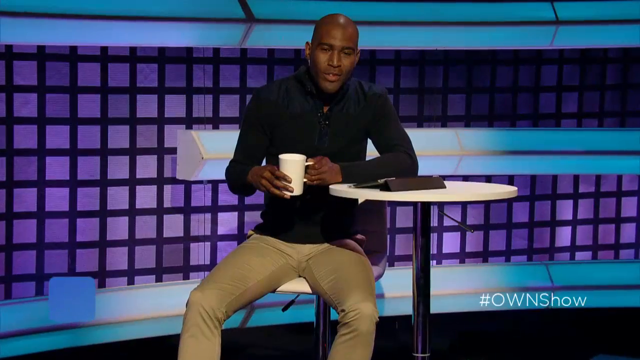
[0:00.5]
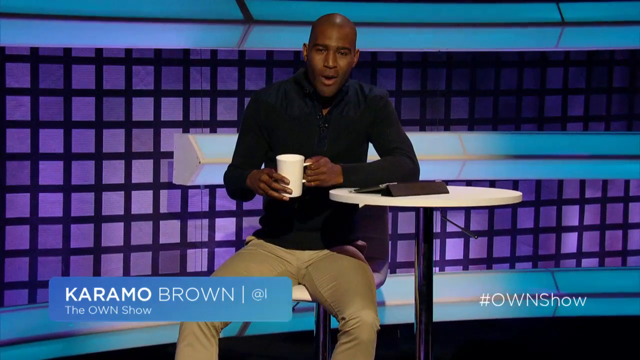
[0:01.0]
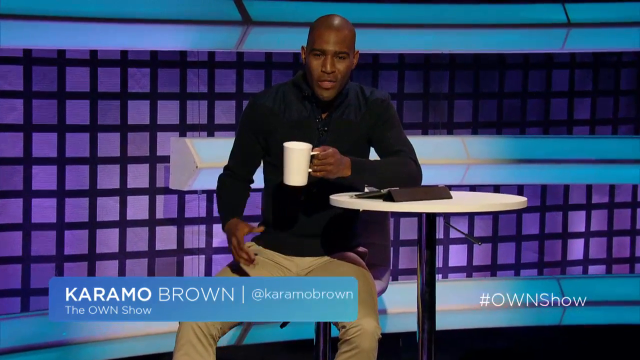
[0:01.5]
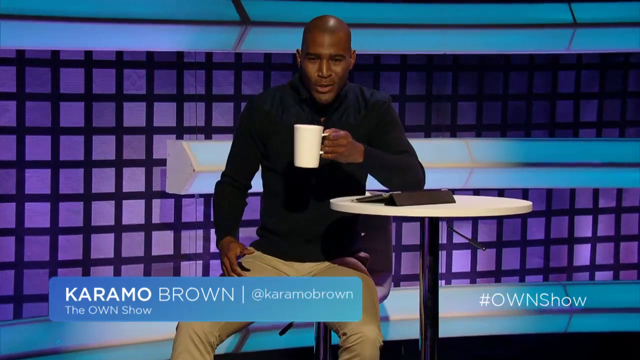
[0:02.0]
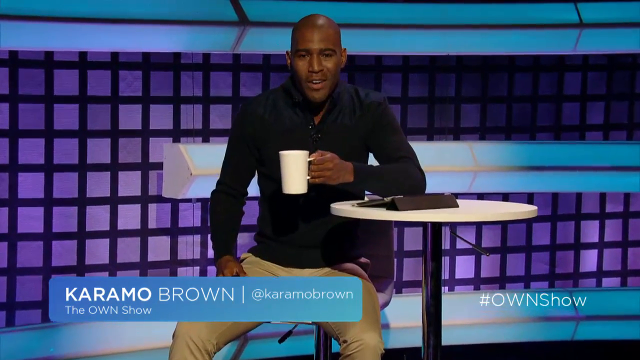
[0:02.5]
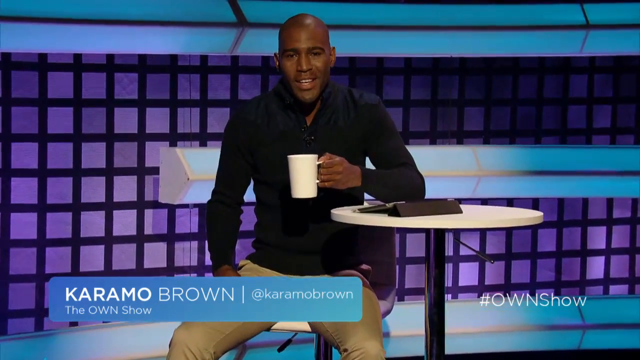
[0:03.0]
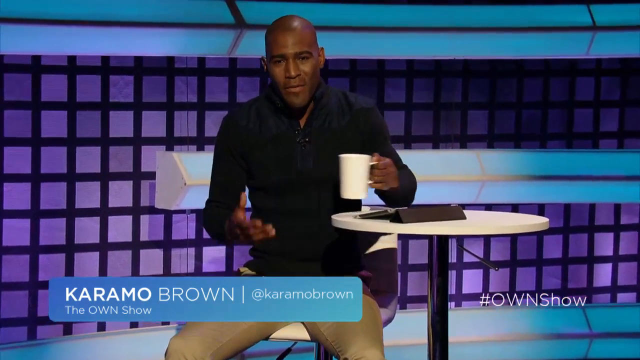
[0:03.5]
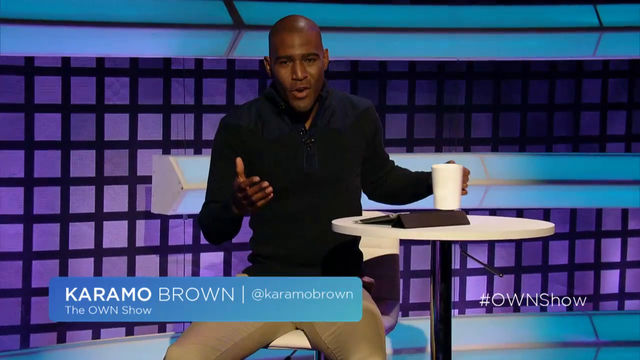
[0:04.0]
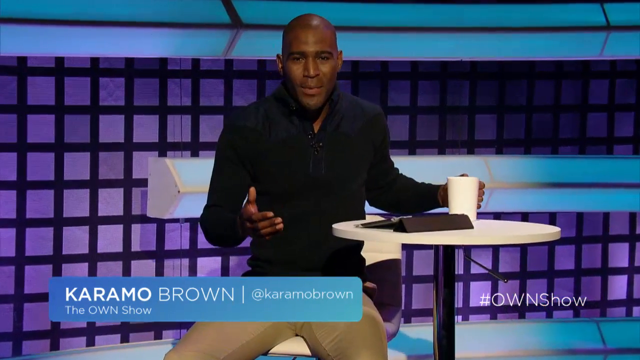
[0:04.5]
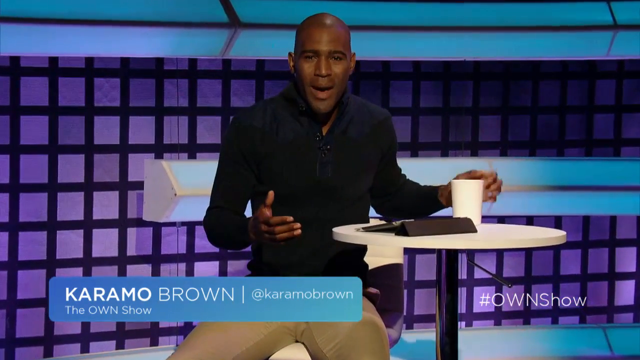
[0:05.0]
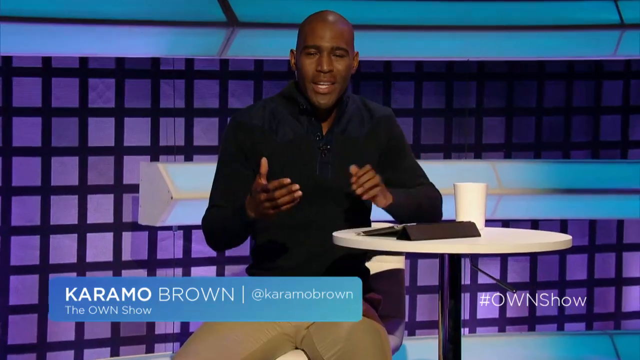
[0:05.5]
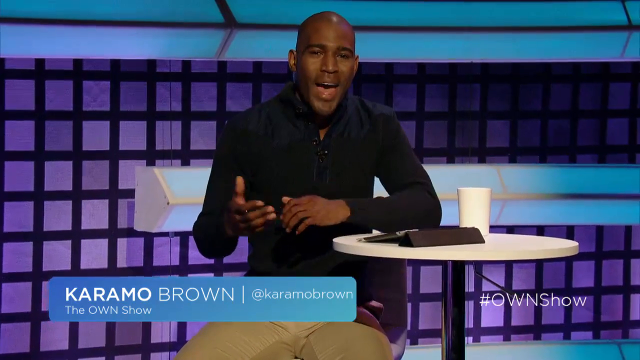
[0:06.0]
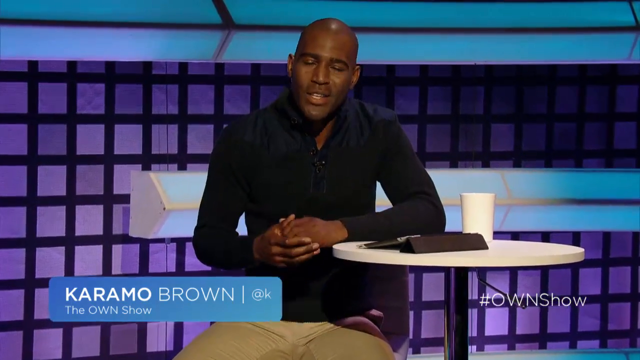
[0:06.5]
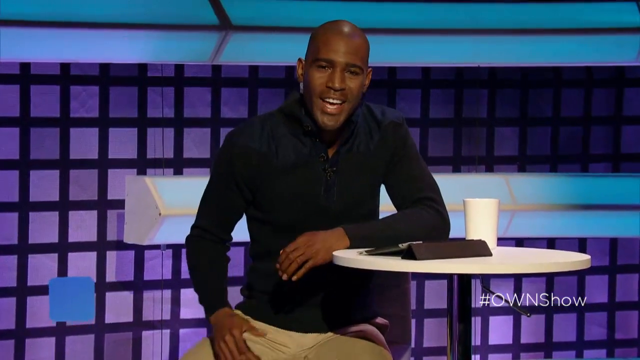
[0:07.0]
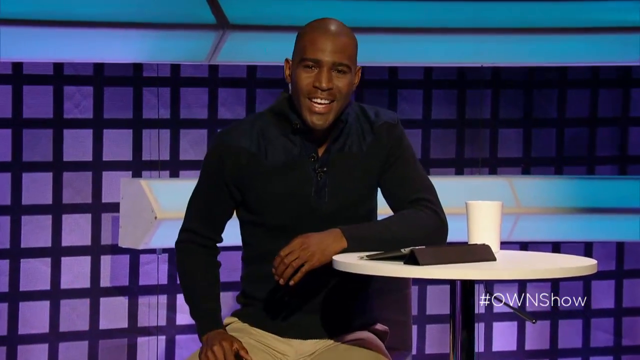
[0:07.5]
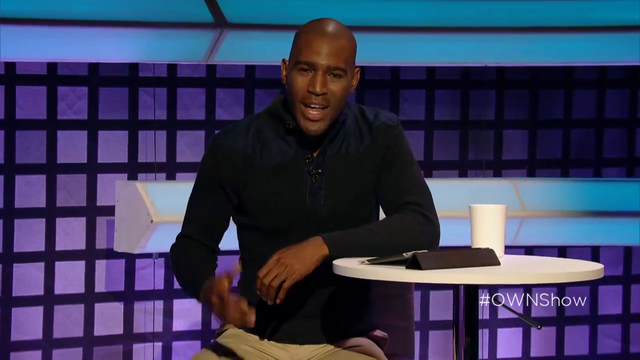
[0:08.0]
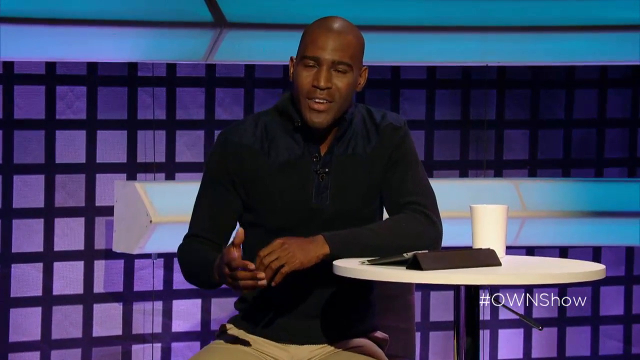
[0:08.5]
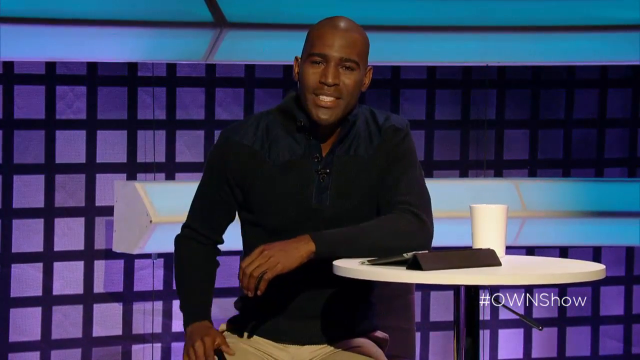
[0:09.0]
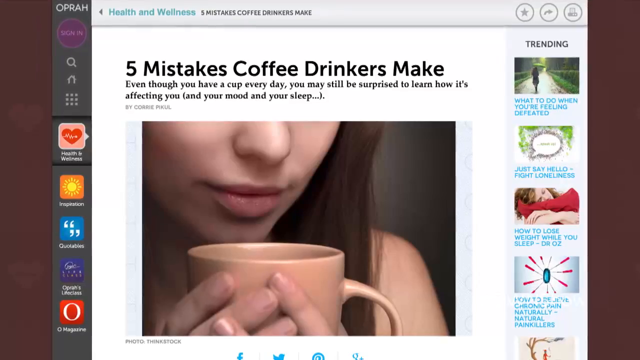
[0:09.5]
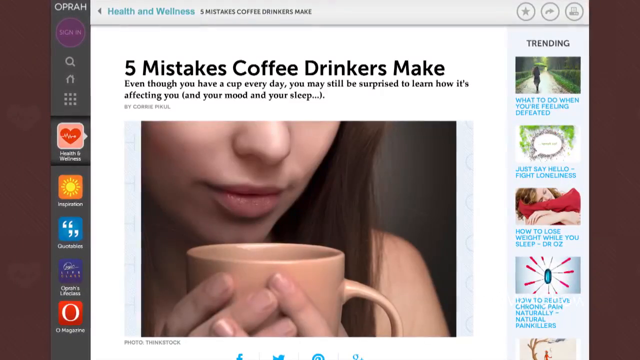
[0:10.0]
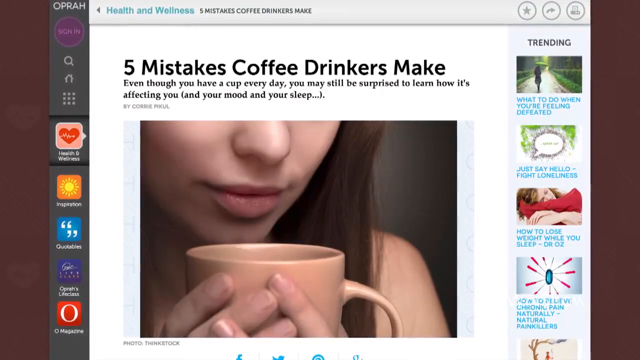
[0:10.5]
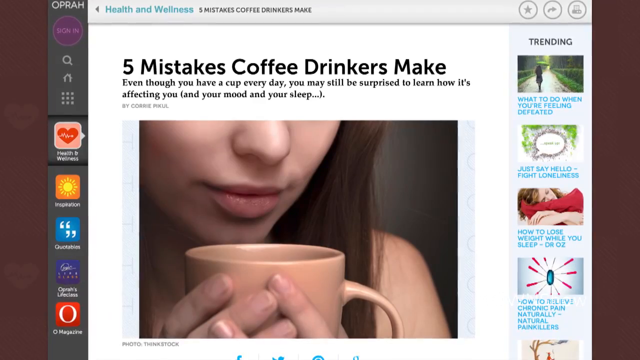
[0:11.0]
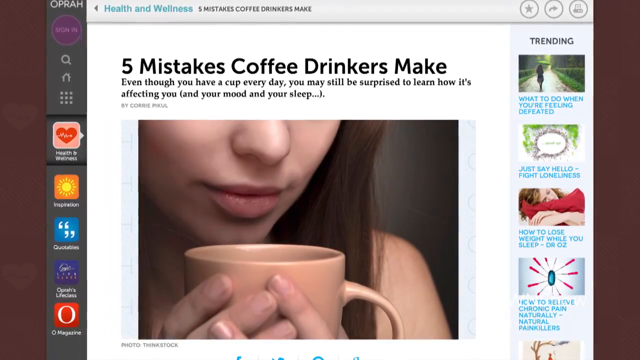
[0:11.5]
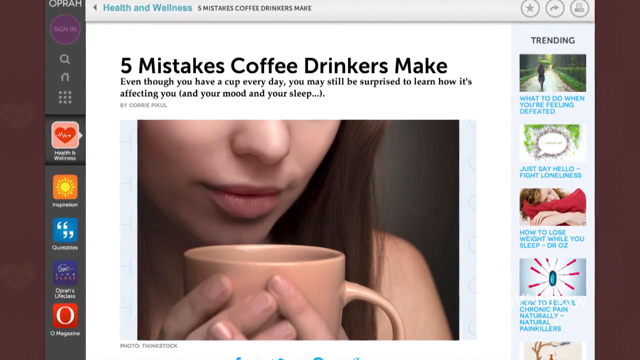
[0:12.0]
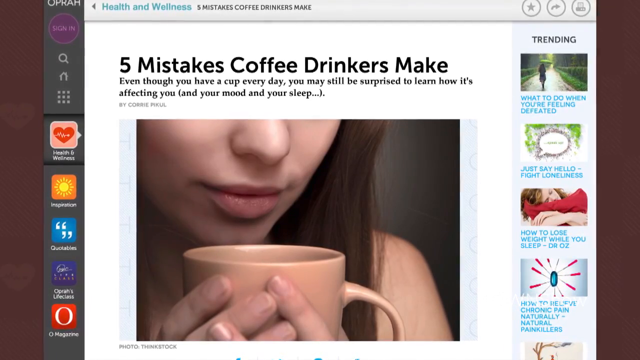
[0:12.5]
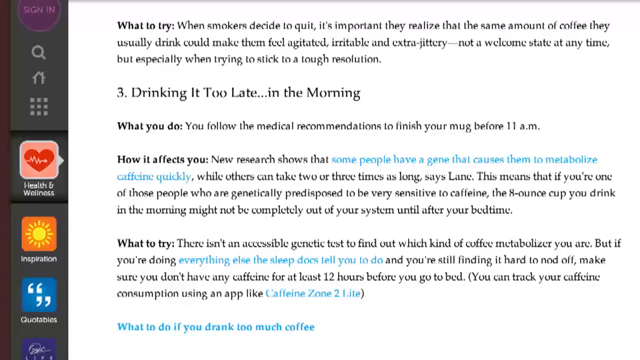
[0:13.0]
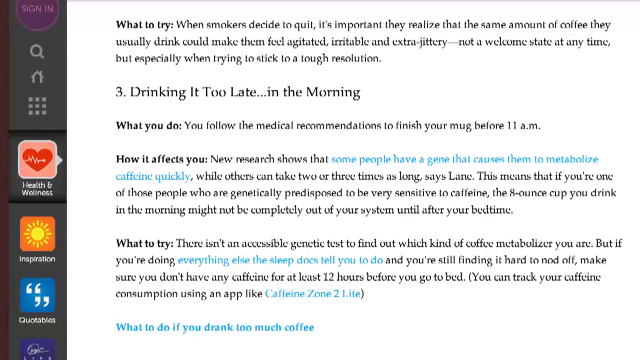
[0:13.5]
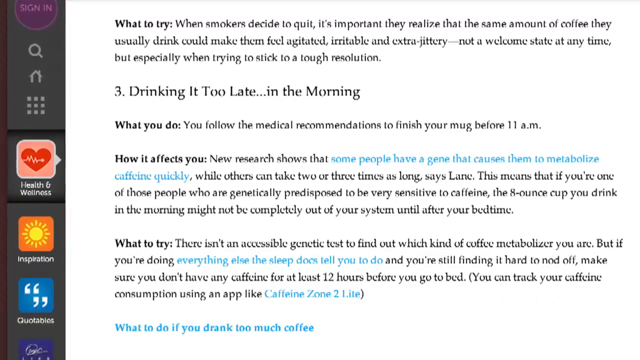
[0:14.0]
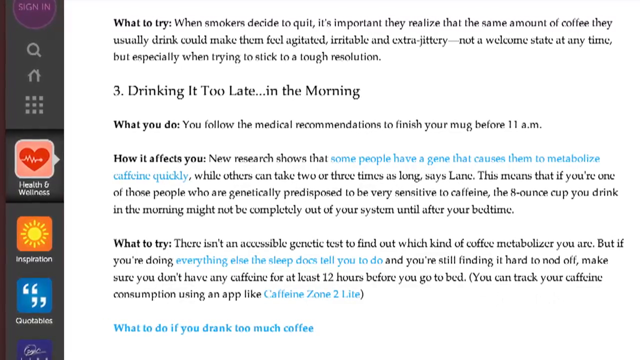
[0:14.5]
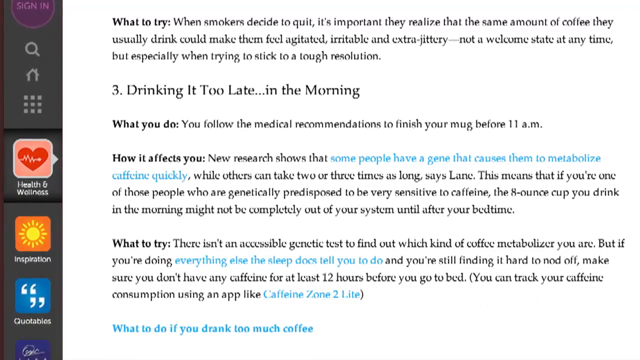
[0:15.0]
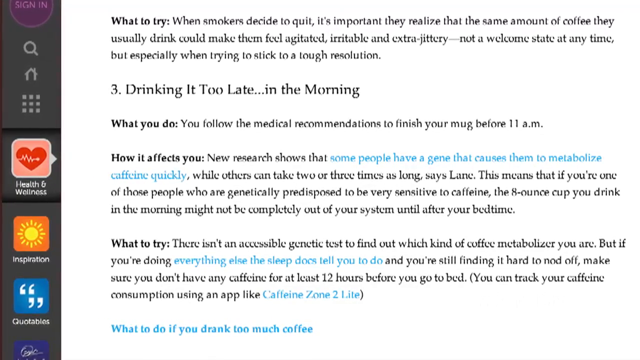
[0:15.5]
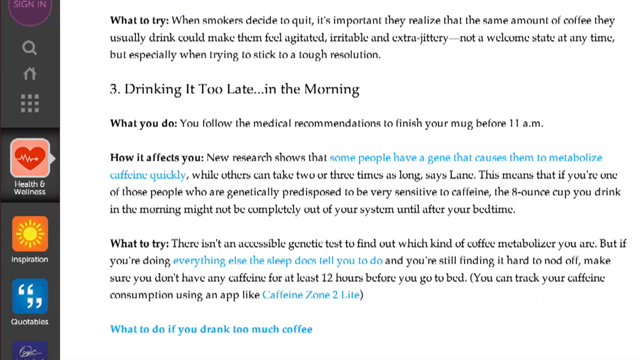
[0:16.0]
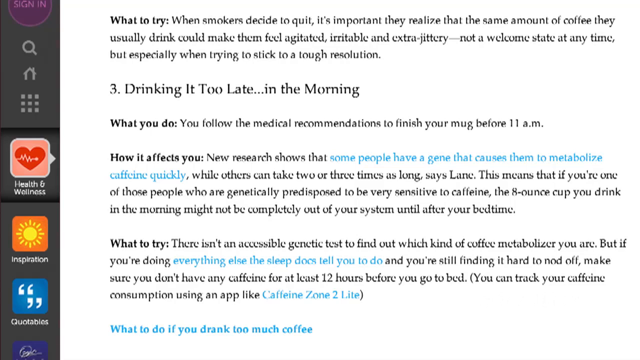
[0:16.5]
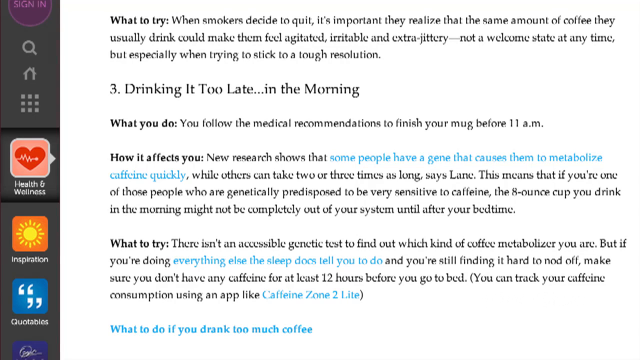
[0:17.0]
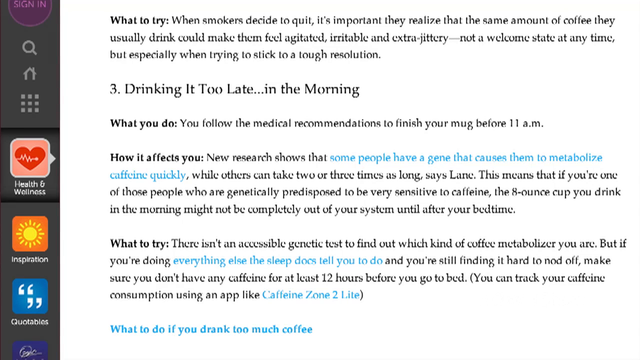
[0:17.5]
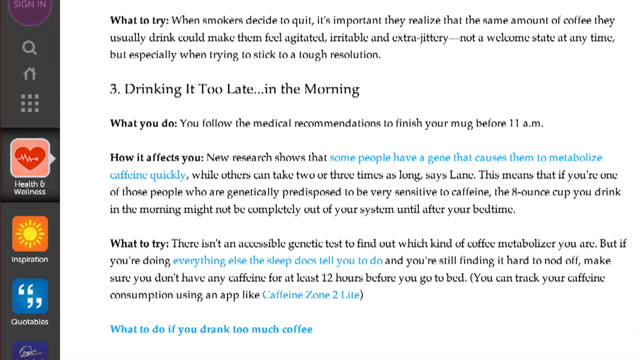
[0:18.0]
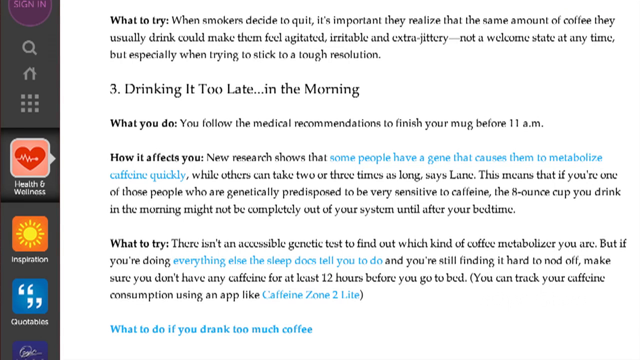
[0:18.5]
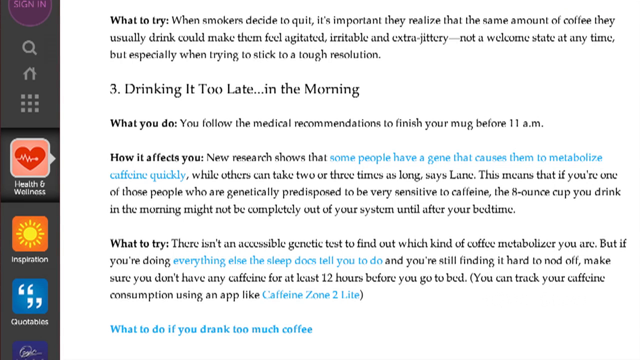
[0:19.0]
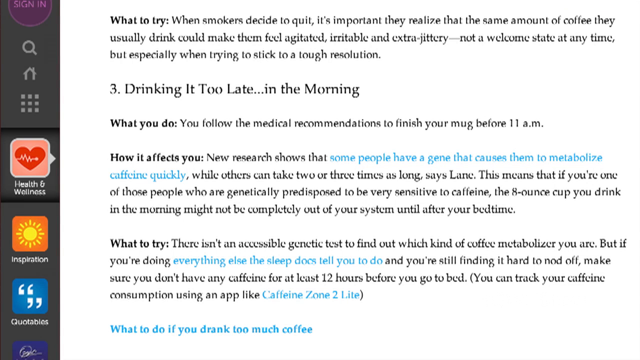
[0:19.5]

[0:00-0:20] A man sits at a table holding a white coffee cup in his hands. Behind him is what looks like a purple and blue screen. He wears what looks like a nice button-down and khaki pants. Text on the screen reads "Karamo Brown, own show." He looks at the camera and talks, somewhat using his hands as he speaks, and then sets the white mug down on top of the table. An article then pops up on the screen as a screen share, reading "five mistakes coffee drinkers make." The view zooms into a section of the article reading "number three, drinking it too late... in the morning," followed by a part on what you do: "you follow the medical recommendations to finish your mug before 11 AM." The article then continues into how it affects you when drinking coffee later and what to try instead.